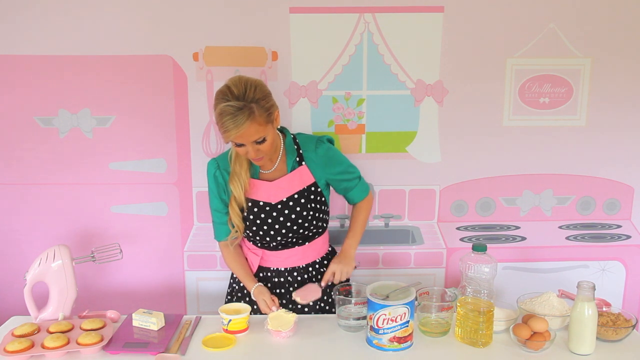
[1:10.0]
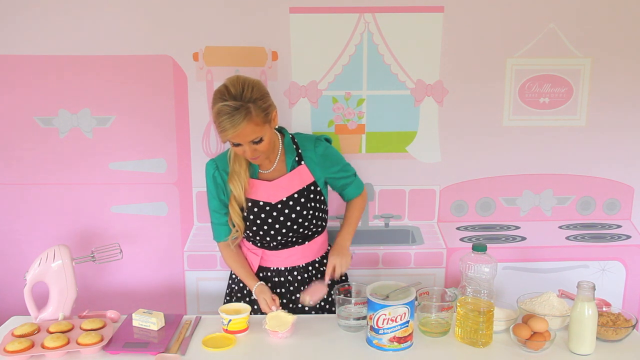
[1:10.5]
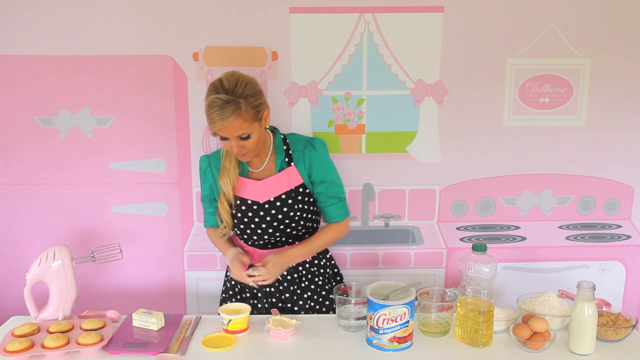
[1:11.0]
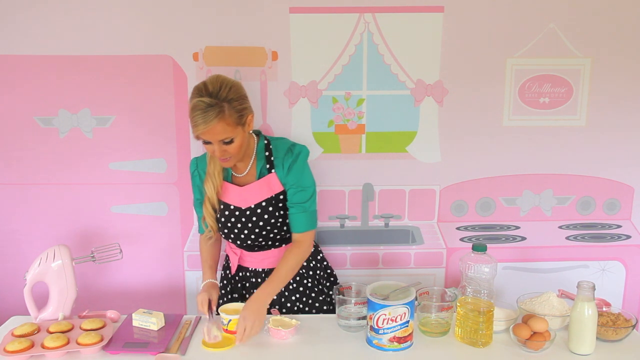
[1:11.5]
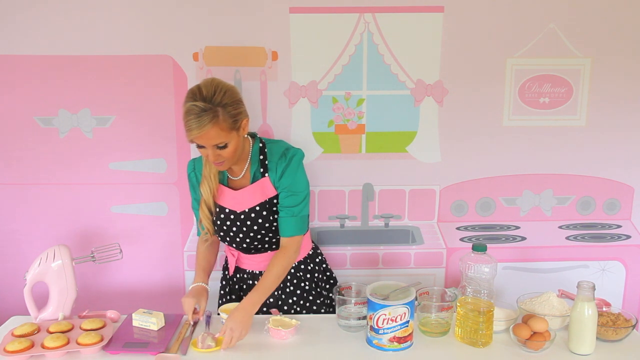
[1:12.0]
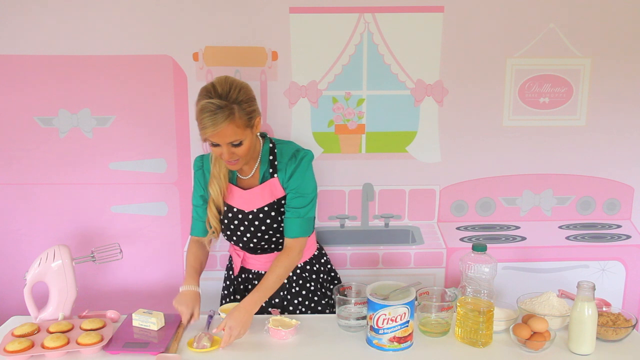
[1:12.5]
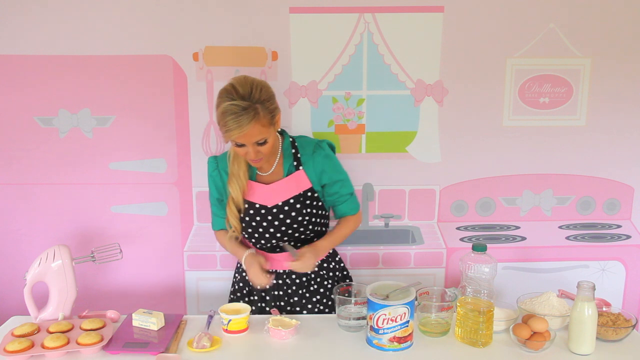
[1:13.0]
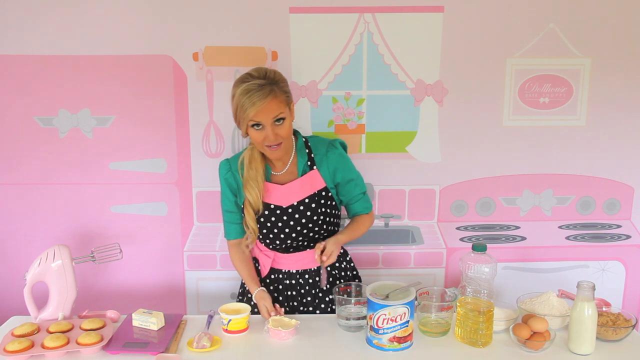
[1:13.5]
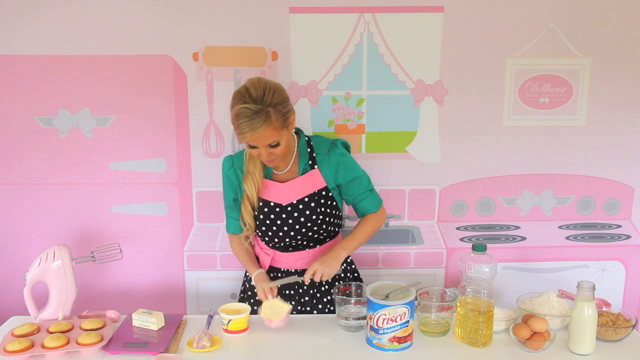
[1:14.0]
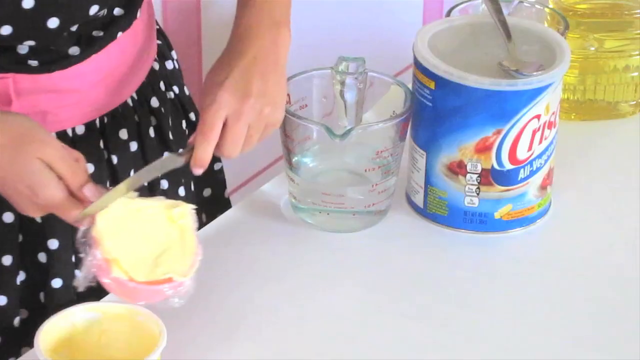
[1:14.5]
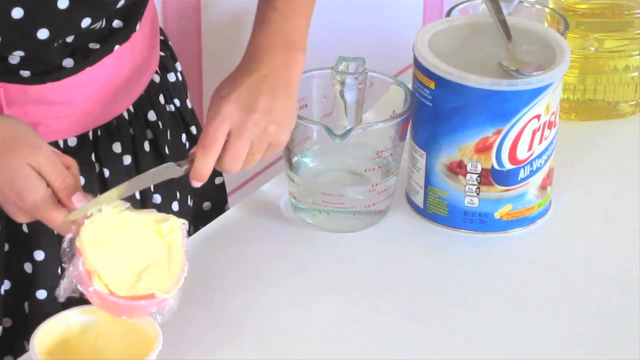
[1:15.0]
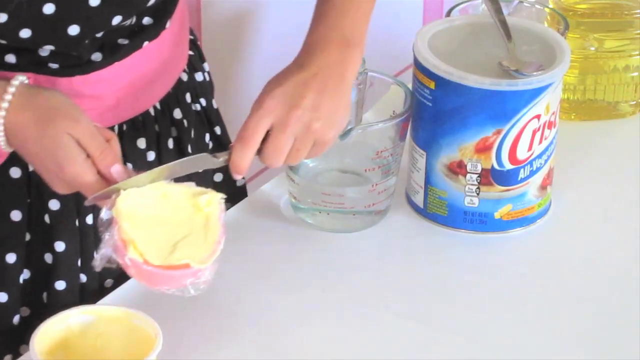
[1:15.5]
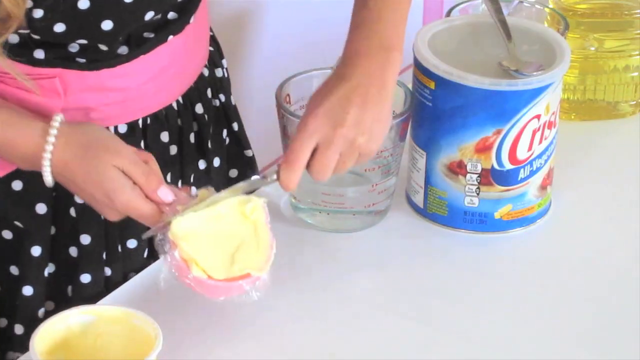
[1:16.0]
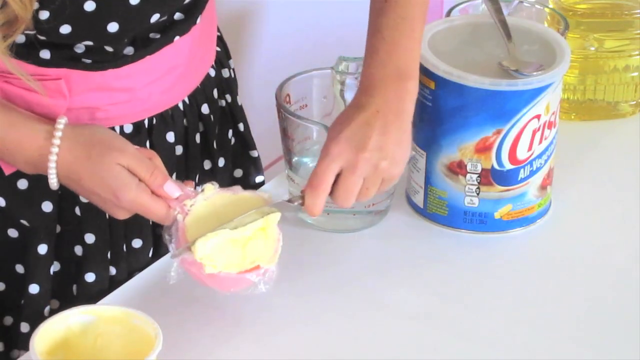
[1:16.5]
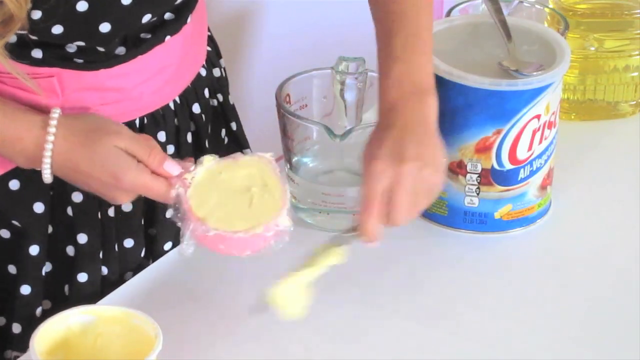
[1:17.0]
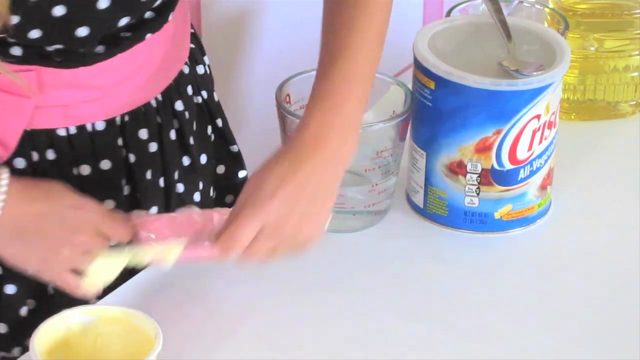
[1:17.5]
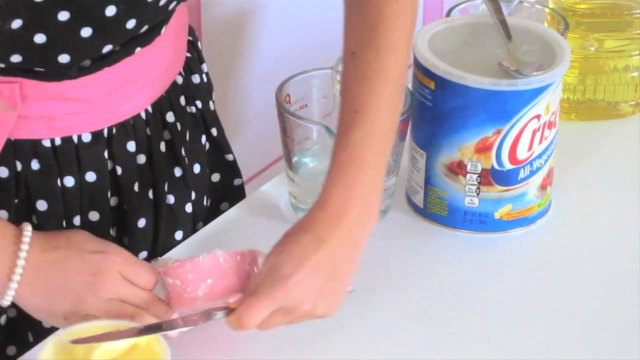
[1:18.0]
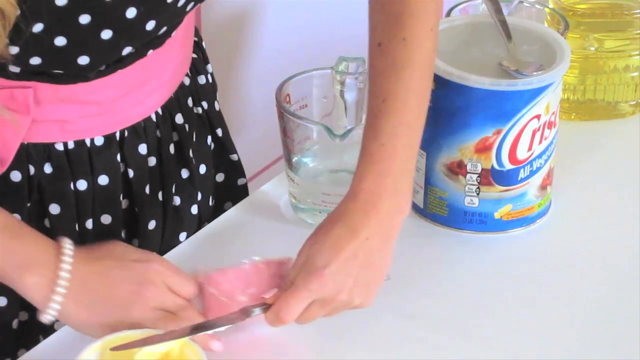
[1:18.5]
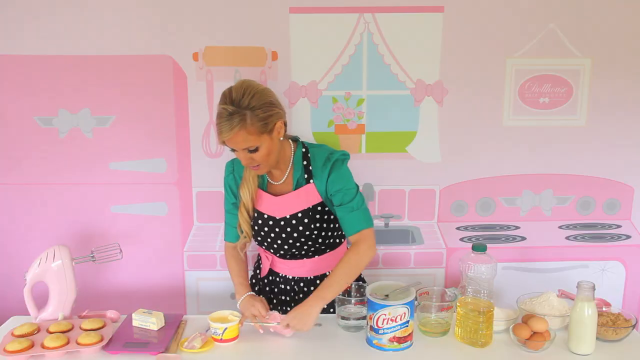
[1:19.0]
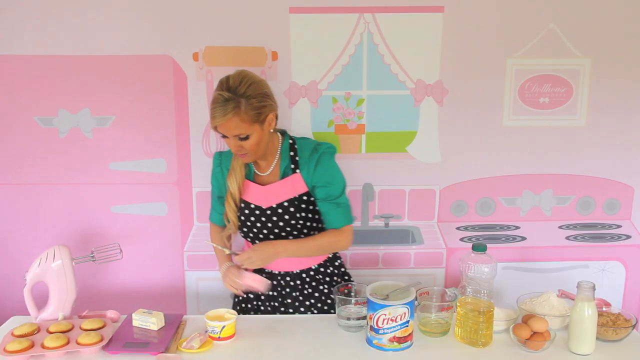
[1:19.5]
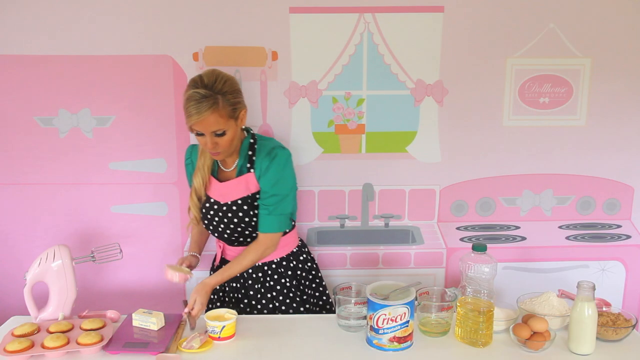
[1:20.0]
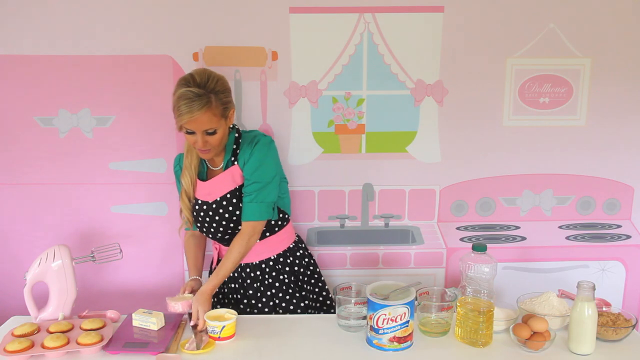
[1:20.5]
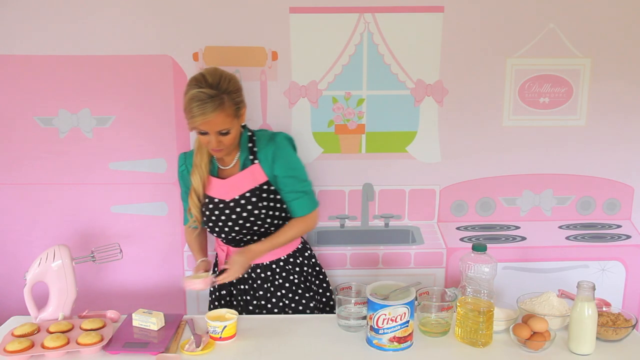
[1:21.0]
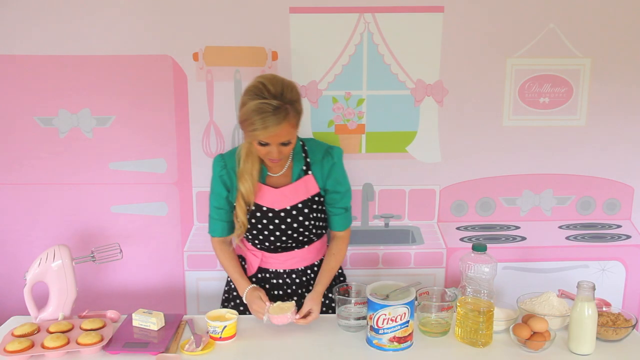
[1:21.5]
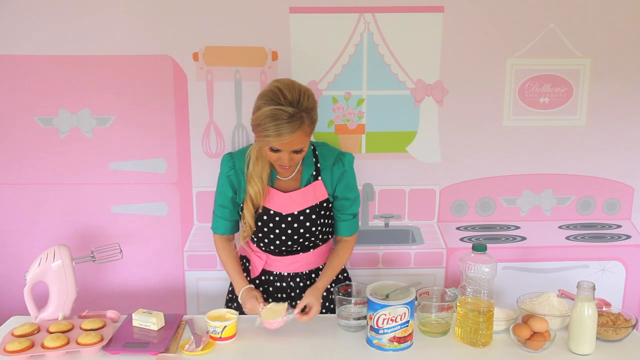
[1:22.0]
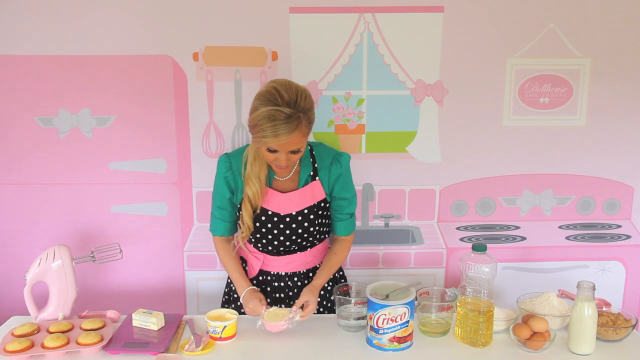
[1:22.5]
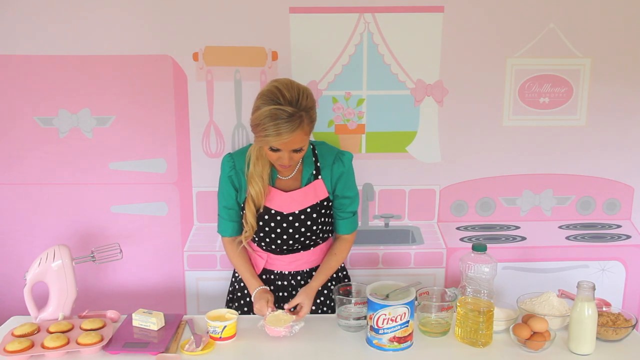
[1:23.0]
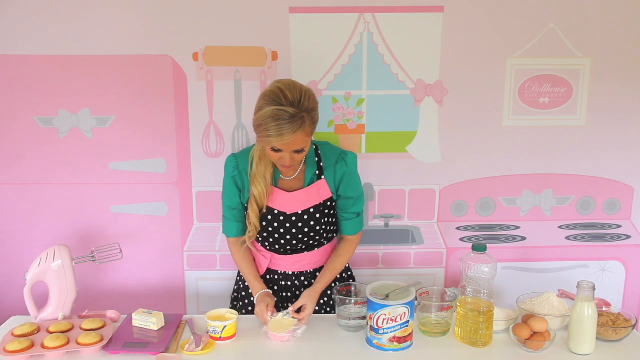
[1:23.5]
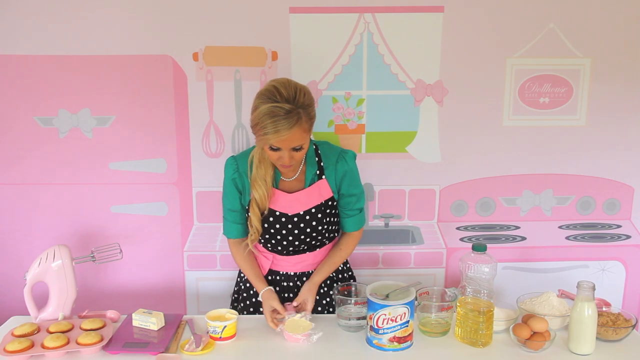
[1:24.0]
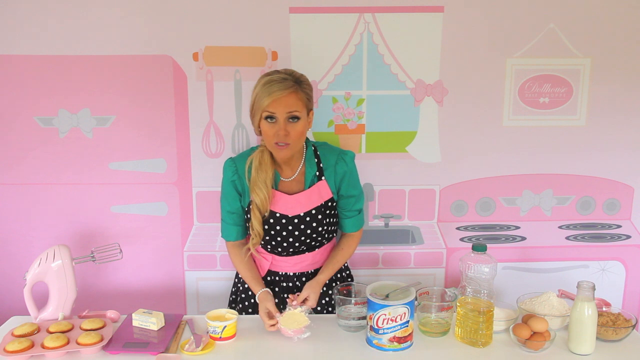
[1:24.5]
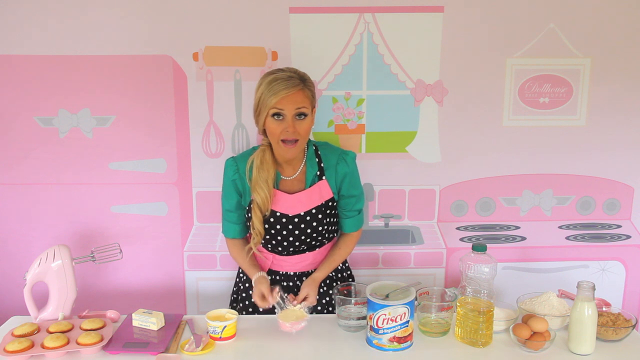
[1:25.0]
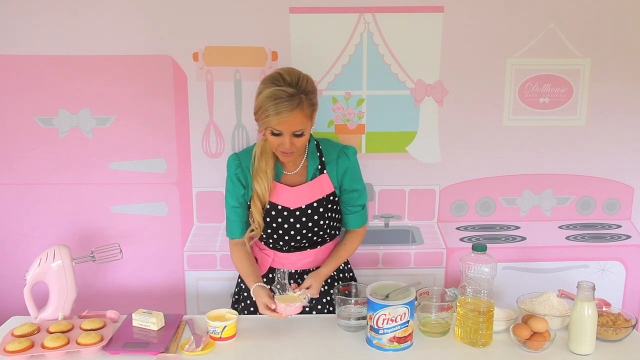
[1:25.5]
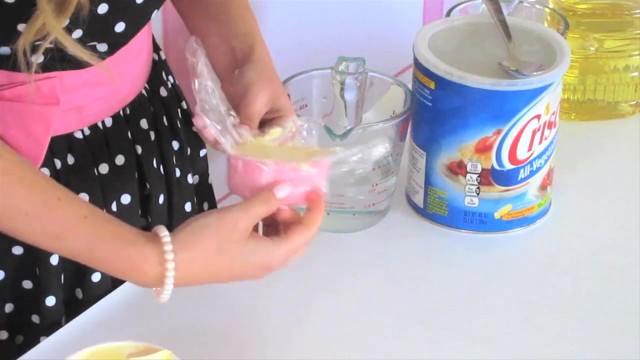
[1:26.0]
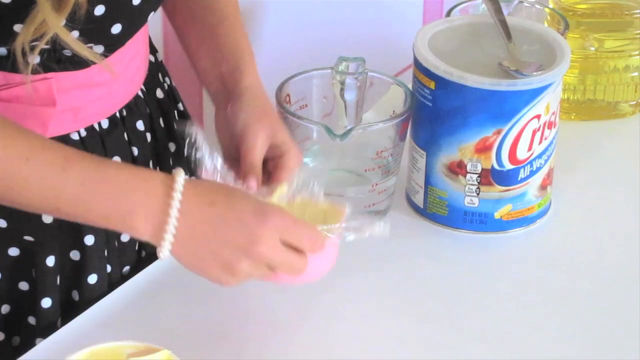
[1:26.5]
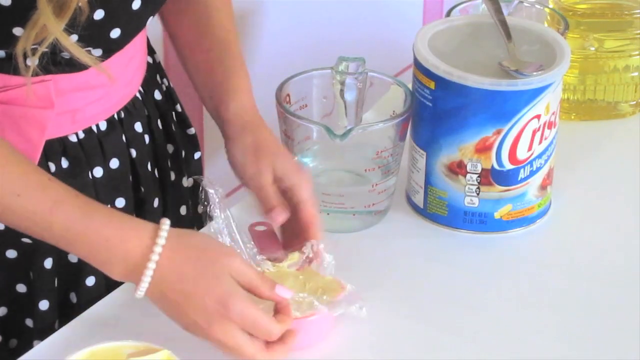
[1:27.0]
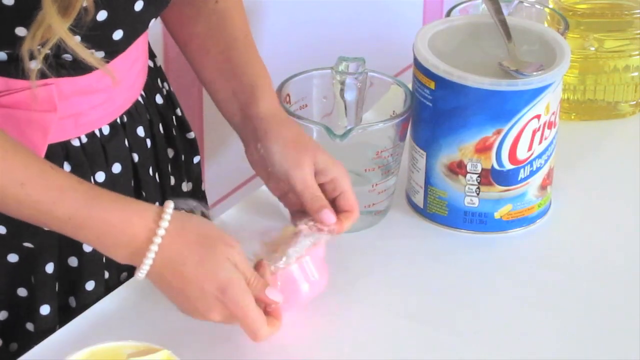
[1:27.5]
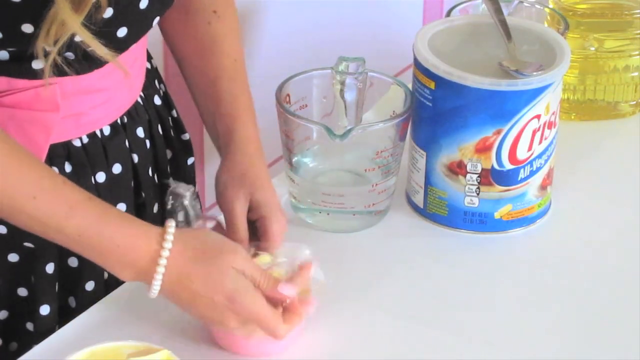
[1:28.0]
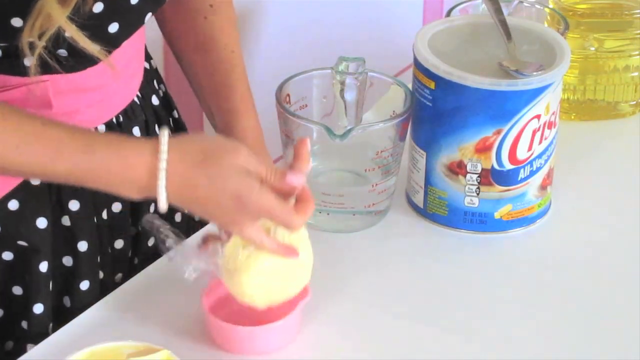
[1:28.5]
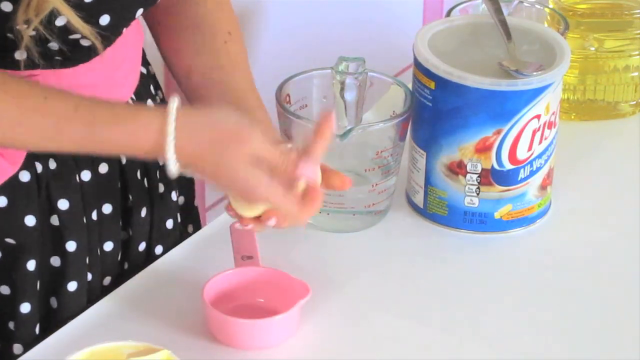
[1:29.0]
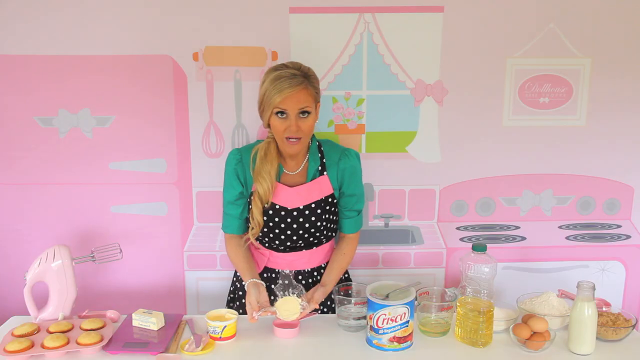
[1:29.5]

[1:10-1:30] She keeps removing the leftover bits and making sure they all go into the pink spoon. She then takes a knife to the top edge of the pink spoon, leaving a fine, thin layer at the top that is flat and even. She covers the top of the pink spoon, which holds what appears to be ice cream or butter, with plastic, then removes it; the plastic had been placed so the mixture can be removed without hassle. She lifts out the plastic, now filled with butter that has taken the shape of the spoon.